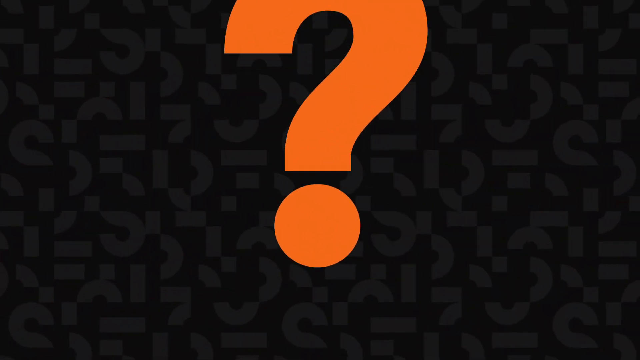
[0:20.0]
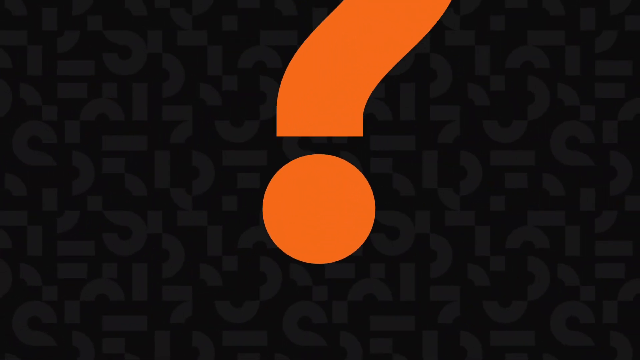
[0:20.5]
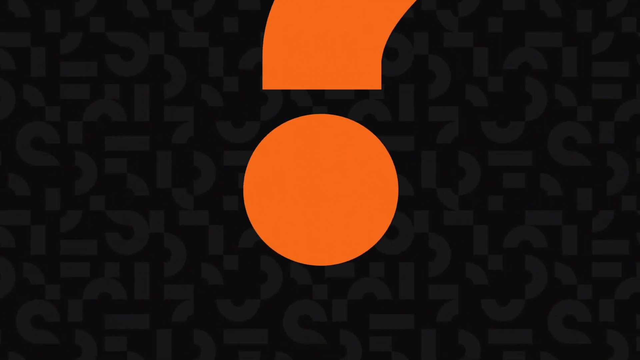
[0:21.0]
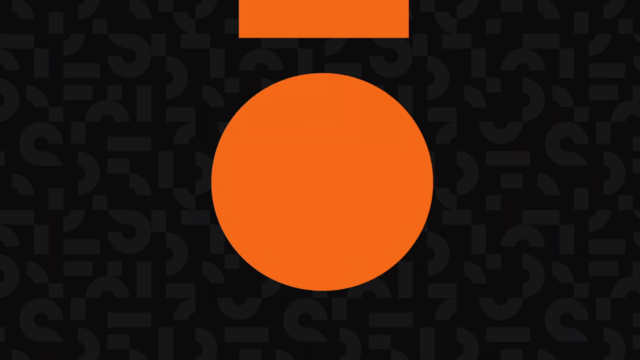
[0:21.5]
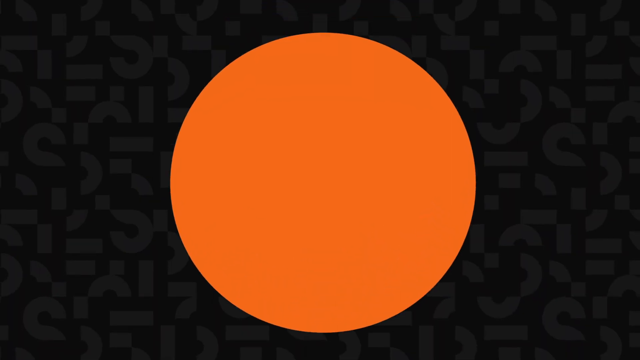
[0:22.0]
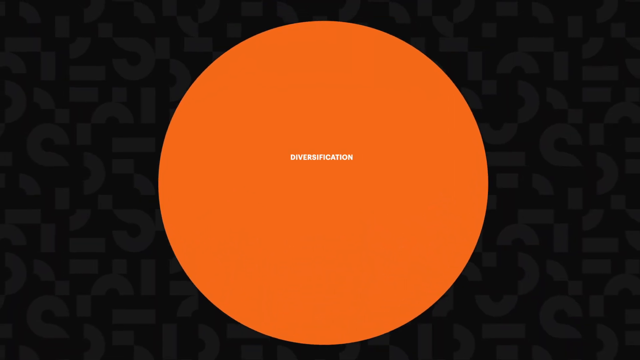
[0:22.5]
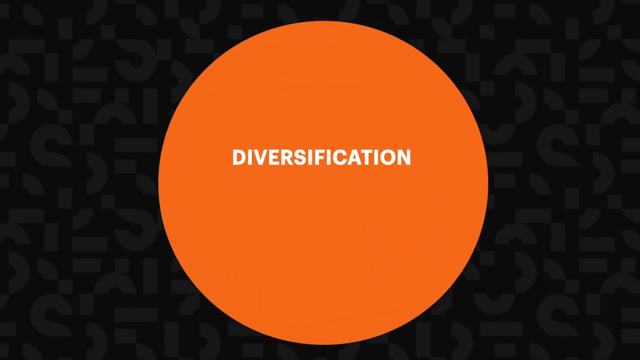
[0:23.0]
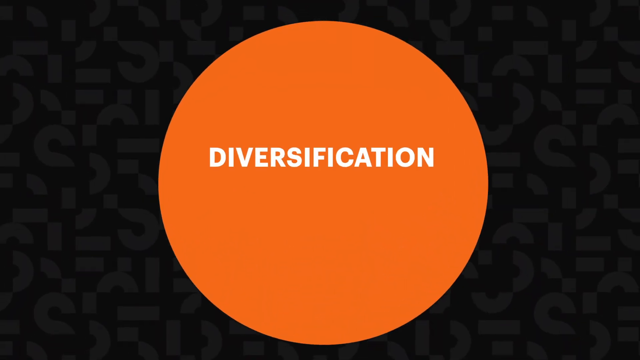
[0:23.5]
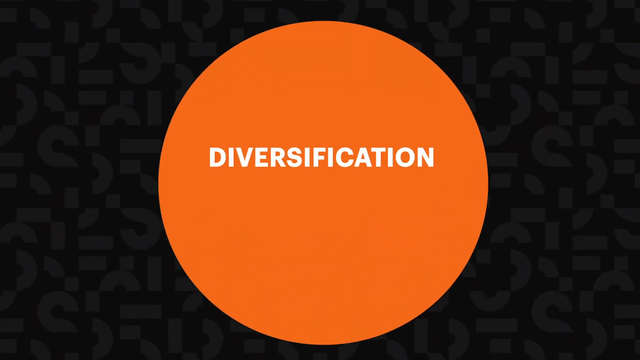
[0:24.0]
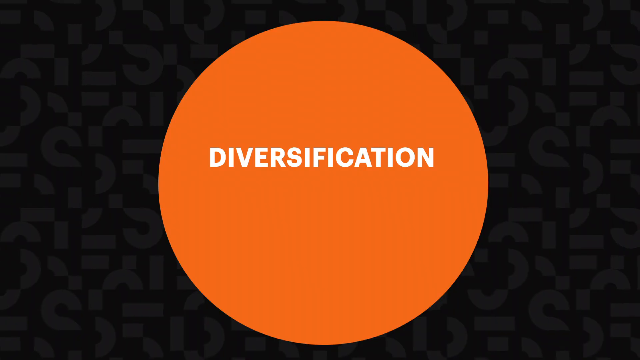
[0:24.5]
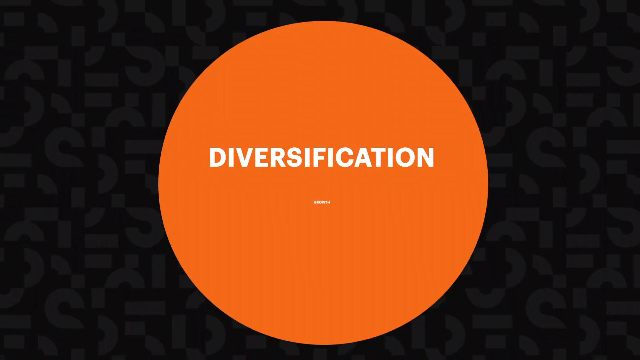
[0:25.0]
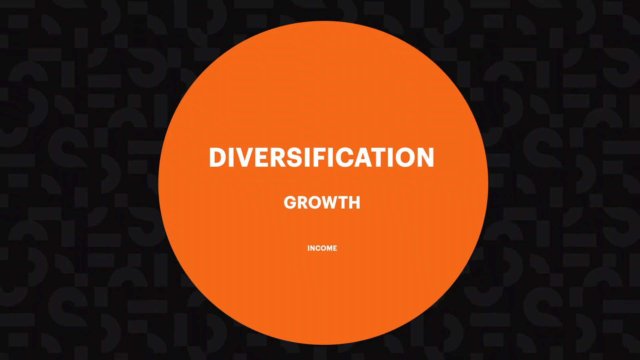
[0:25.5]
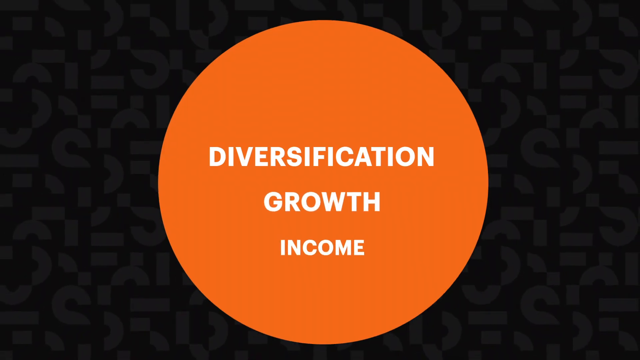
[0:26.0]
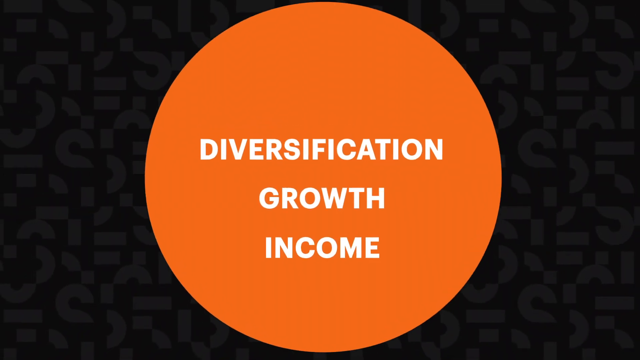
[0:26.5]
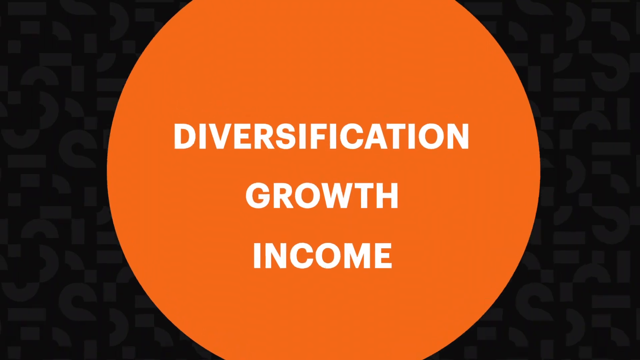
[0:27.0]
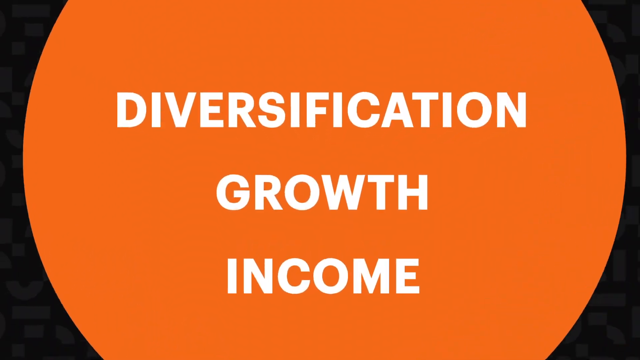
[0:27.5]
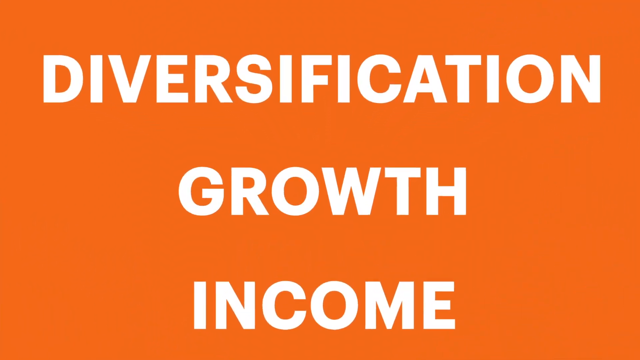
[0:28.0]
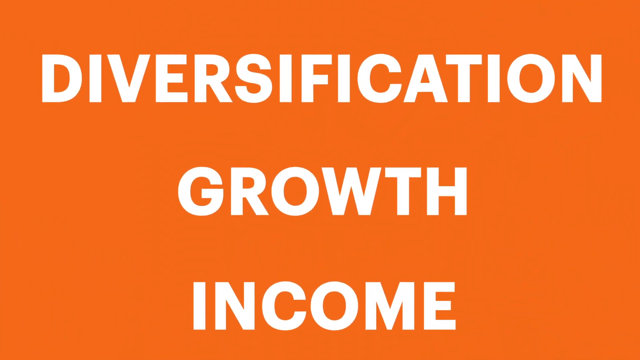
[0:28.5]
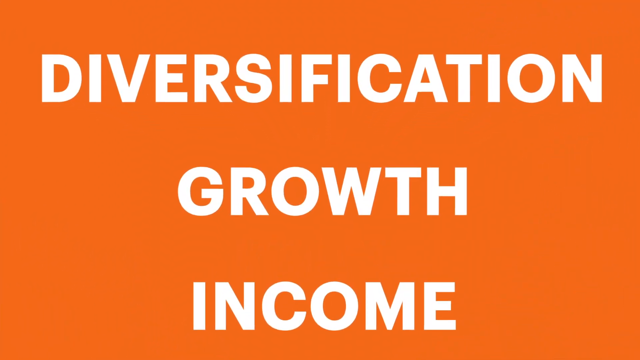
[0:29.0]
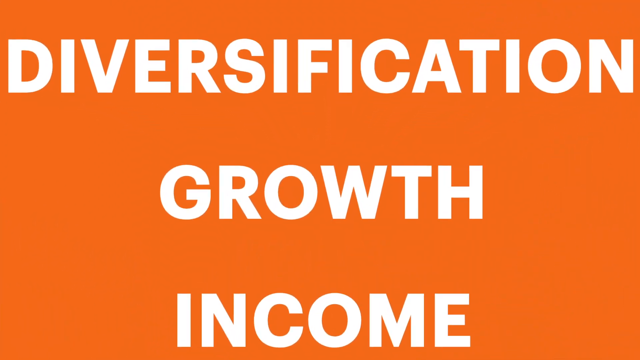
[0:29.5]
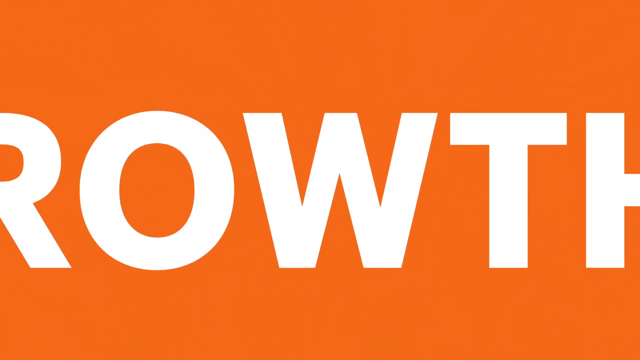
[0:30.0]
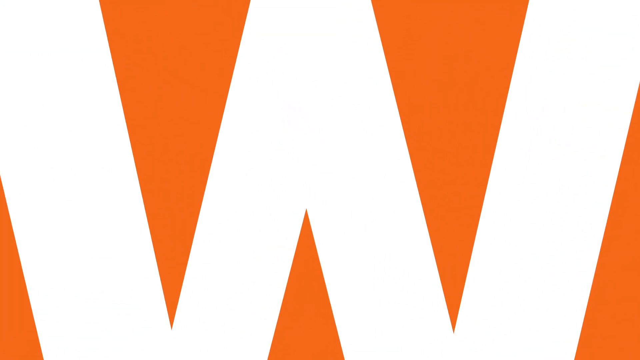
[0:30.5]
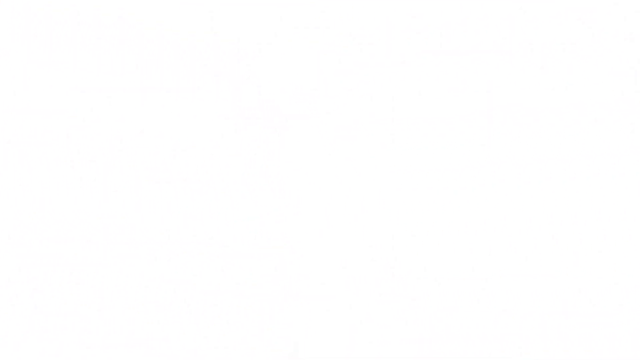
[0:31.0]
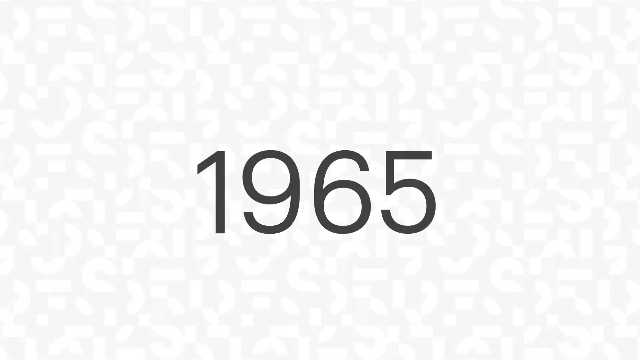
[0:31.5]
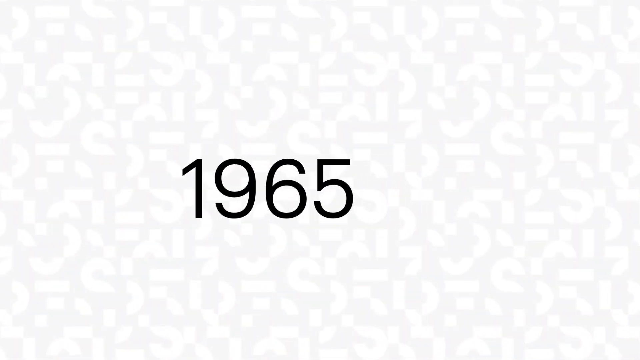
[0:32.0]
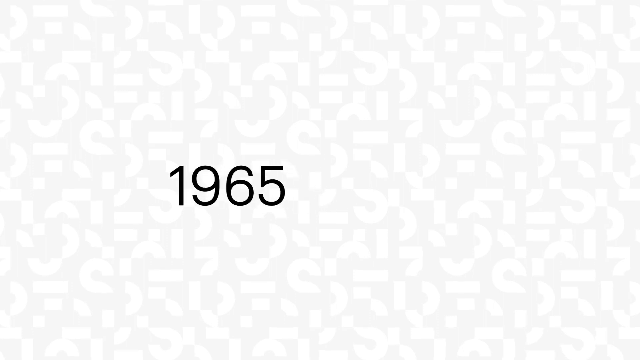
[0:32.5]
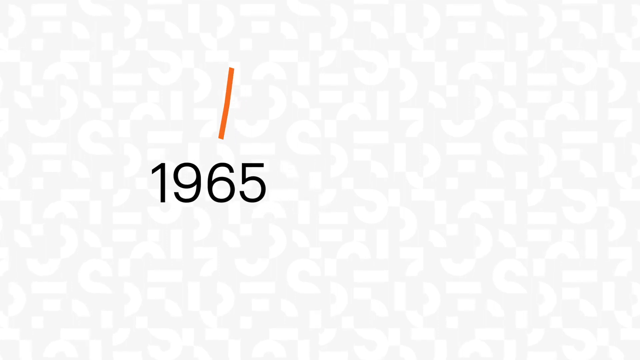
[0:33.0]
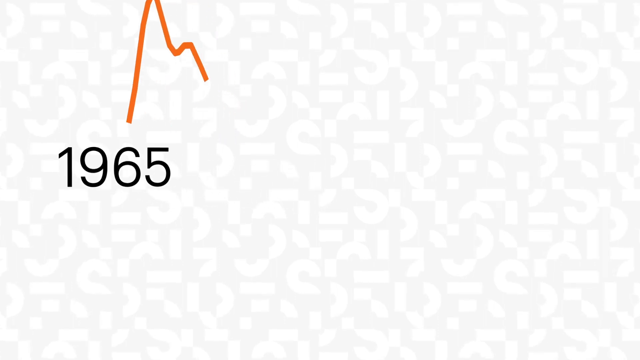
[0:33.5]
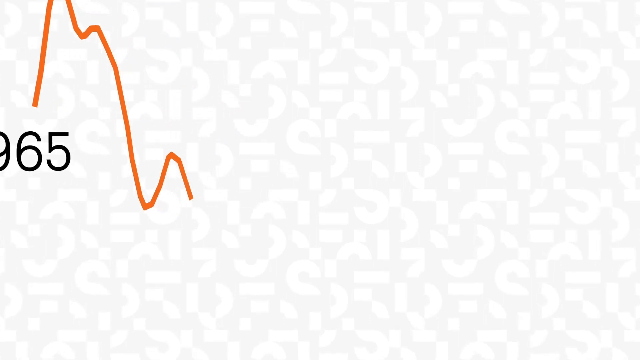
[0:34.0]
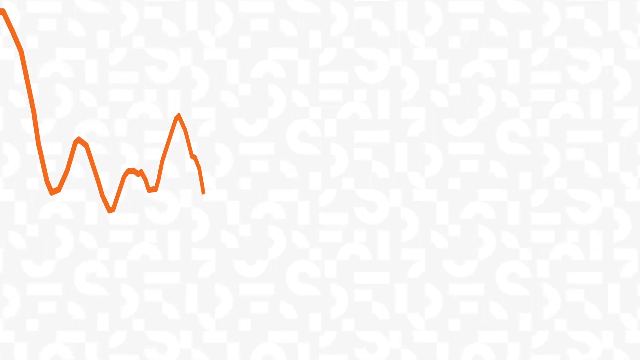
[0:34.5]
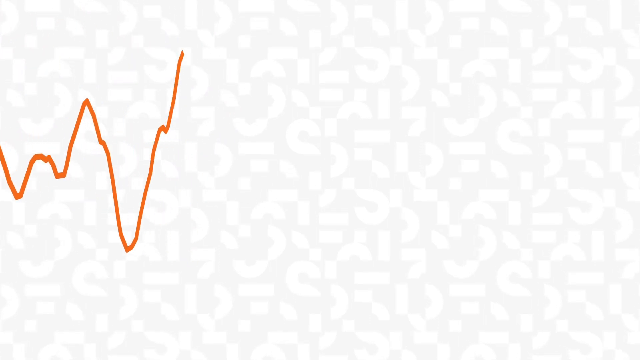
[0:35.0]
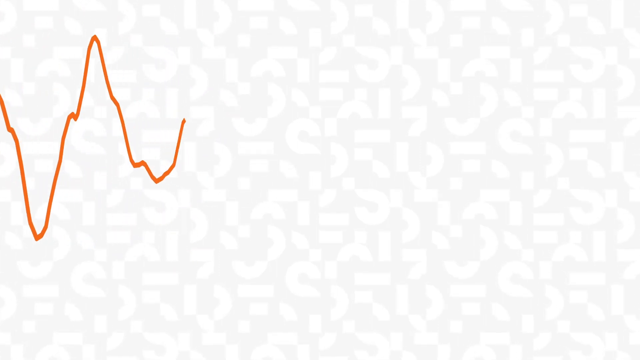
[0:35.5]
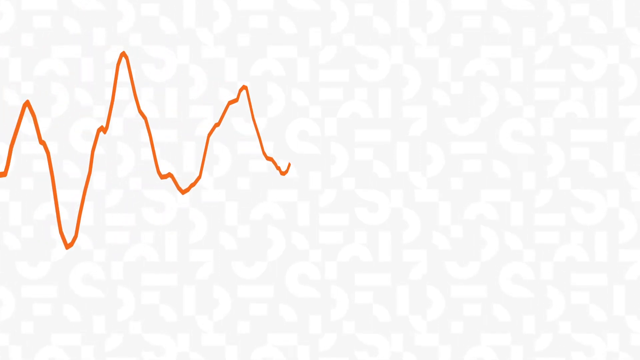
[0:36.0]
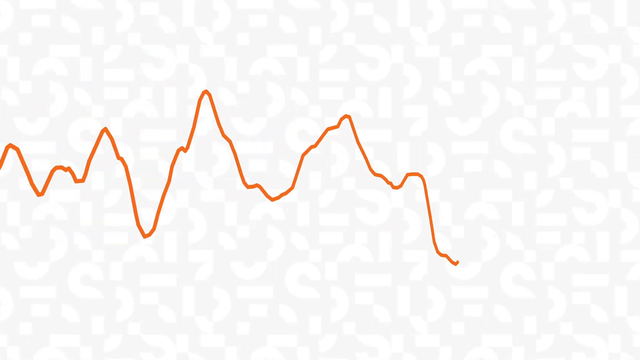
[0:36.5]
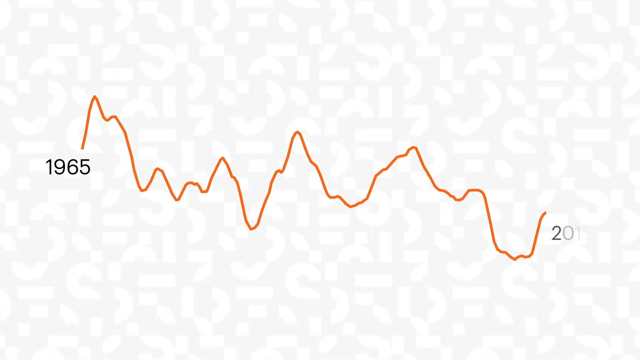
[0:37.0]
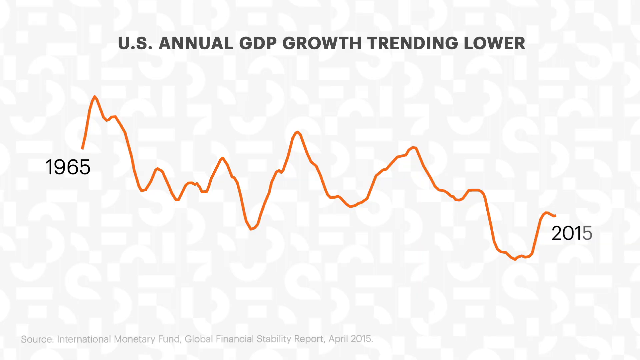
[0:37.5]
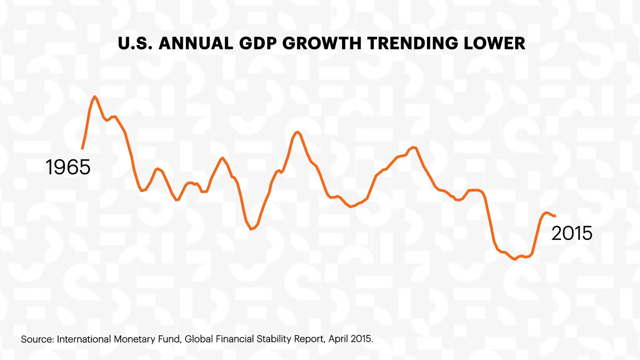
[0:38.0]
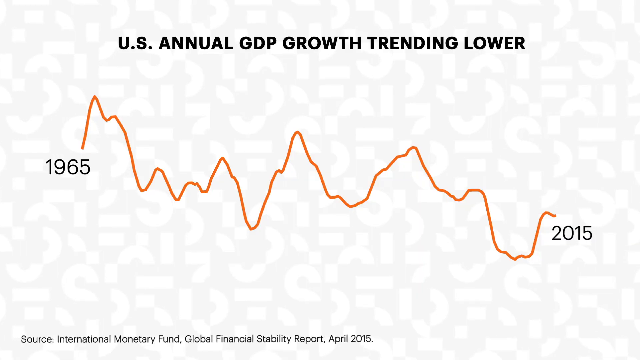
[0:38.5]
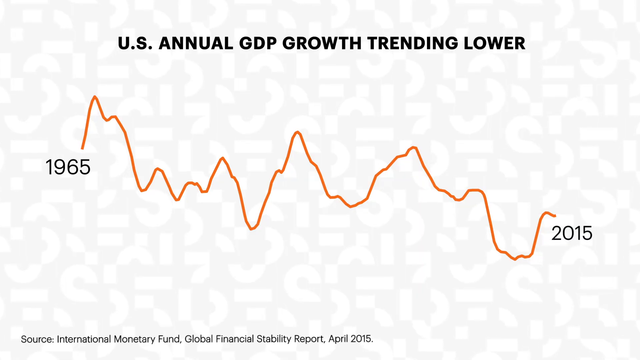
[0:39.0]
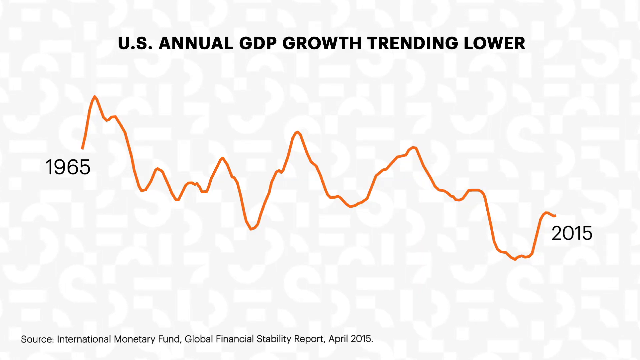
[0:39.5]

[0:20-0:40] A large orange question mark in the center of the screen gets bigger and bigger until its dot is in the middle of the screen. The words "diversification," "growth," "income" appear inside the orange dot in white capital letters. The dot then expands and overtakes the entire screen, covering it with orange, and the view zooms in on the letter W in "growth." The background turns white and the year "1965" appears in black. The year slowly shrinks, and an orange line, kind of like a stock market graph, jitters across the screen, bumping up and down. The view zooms out to show the year "2015" at the end of the graph, also in black. At the middle top of the screen, black all-caps text on the white background reads "U.S. annual GDP growth trending lower."